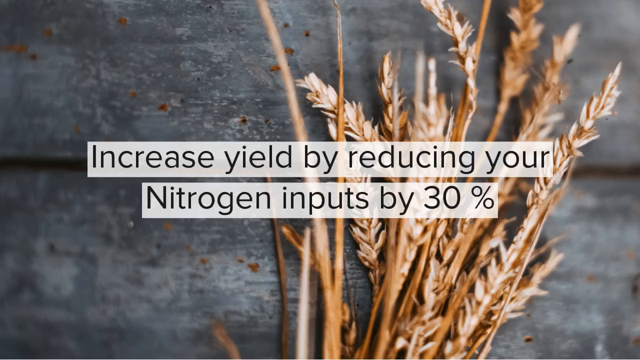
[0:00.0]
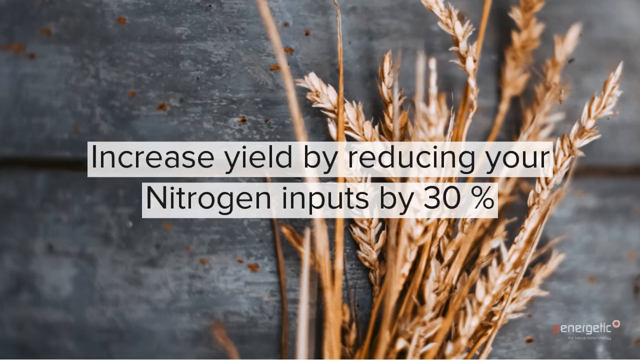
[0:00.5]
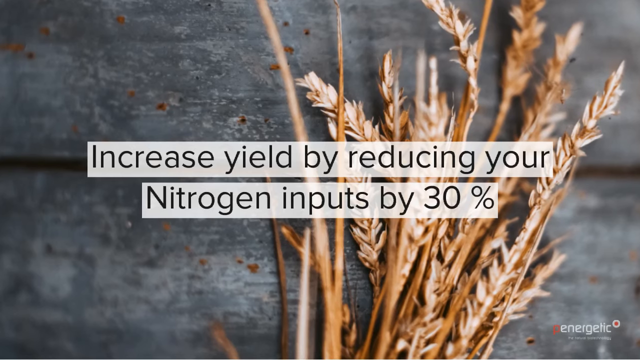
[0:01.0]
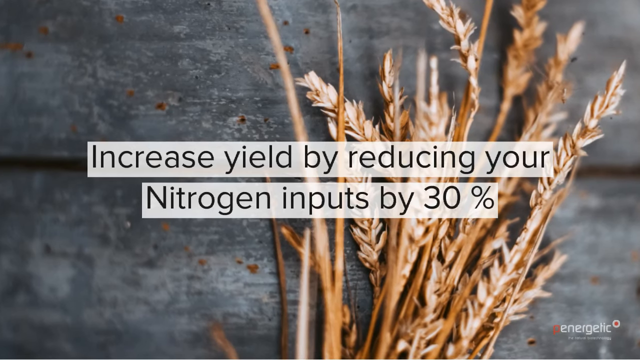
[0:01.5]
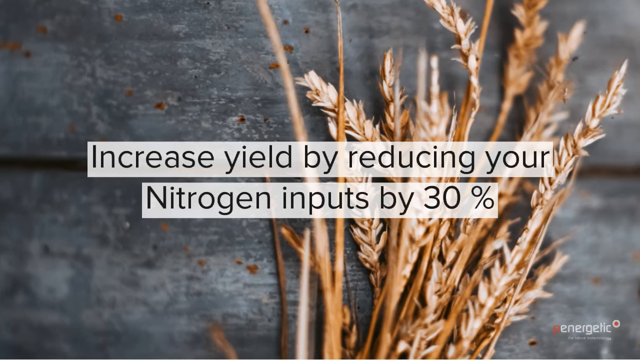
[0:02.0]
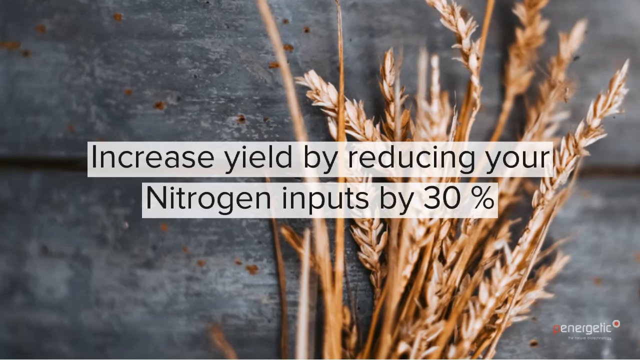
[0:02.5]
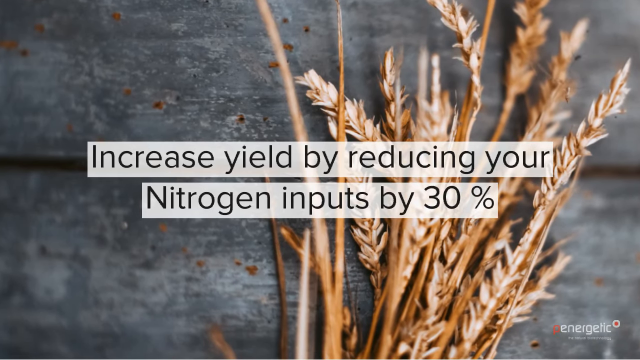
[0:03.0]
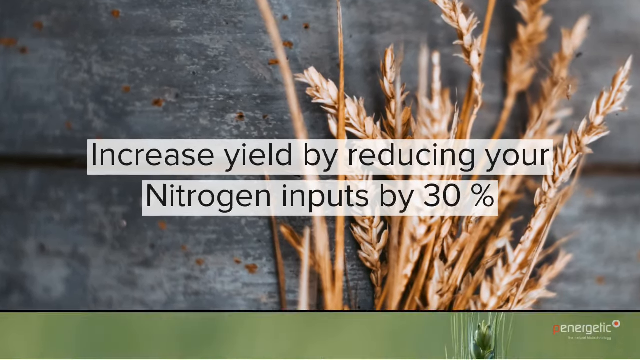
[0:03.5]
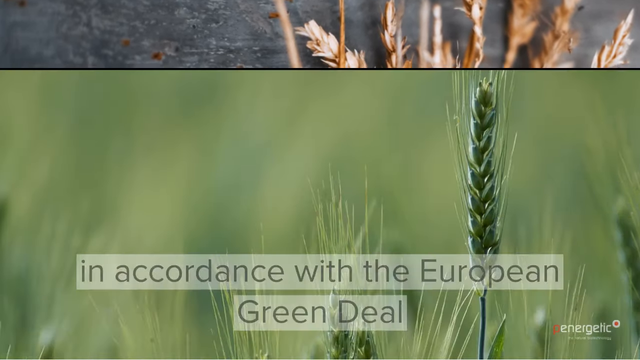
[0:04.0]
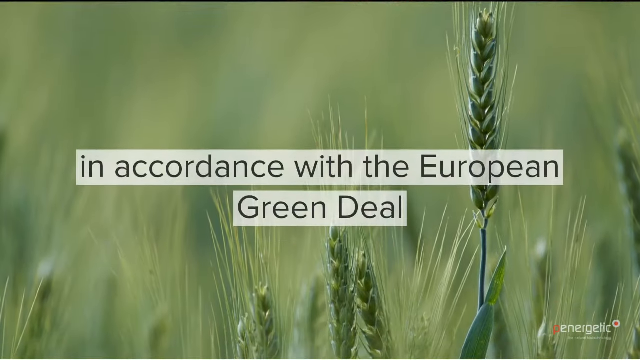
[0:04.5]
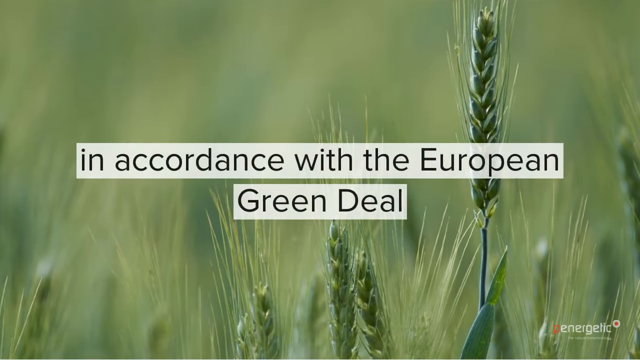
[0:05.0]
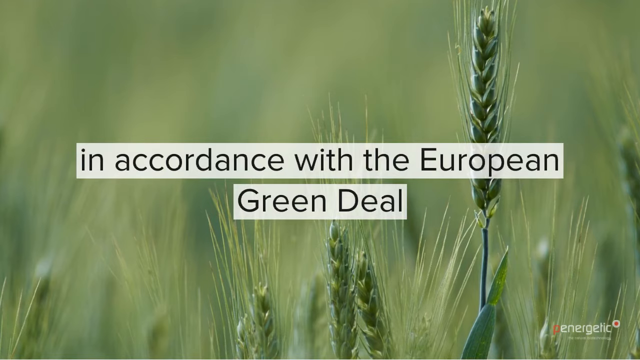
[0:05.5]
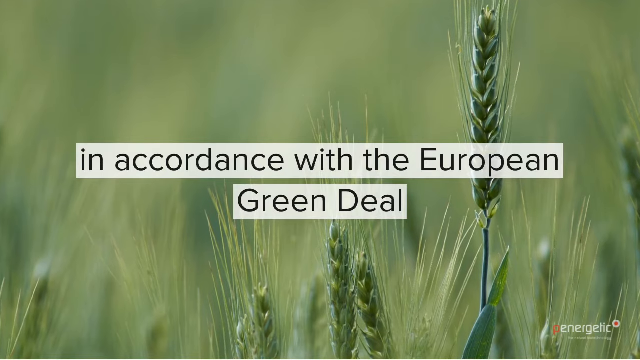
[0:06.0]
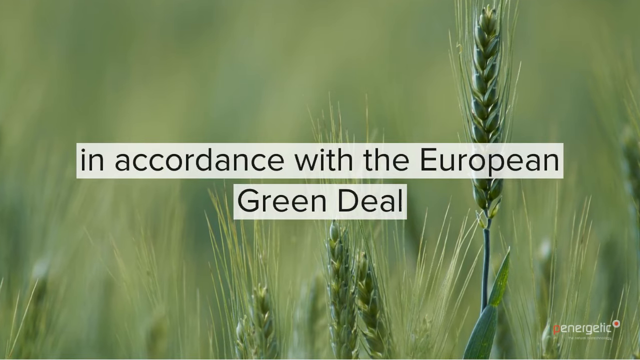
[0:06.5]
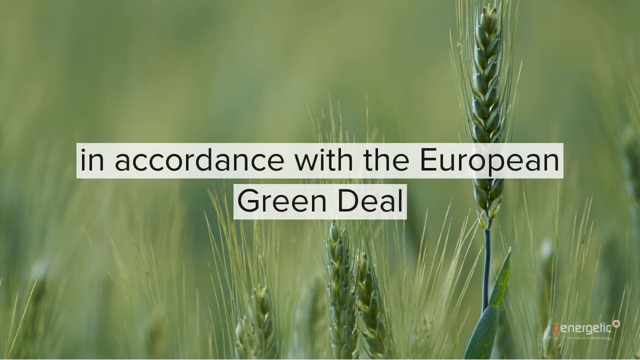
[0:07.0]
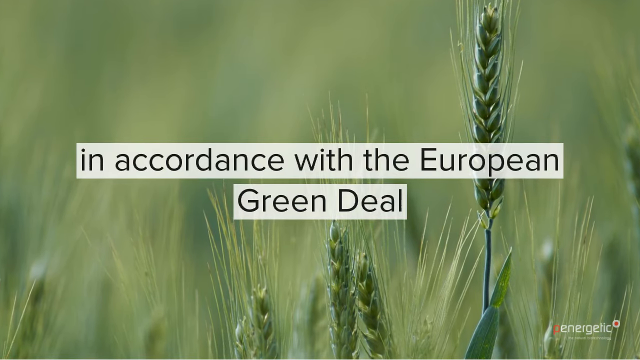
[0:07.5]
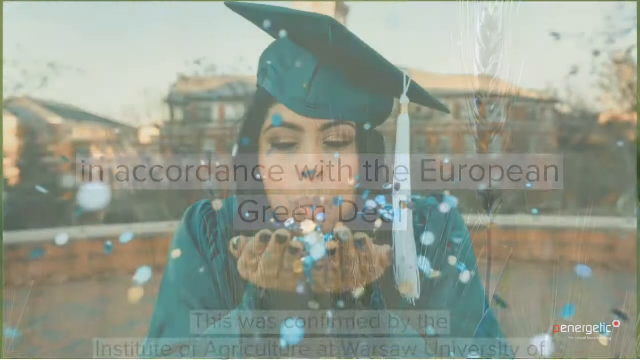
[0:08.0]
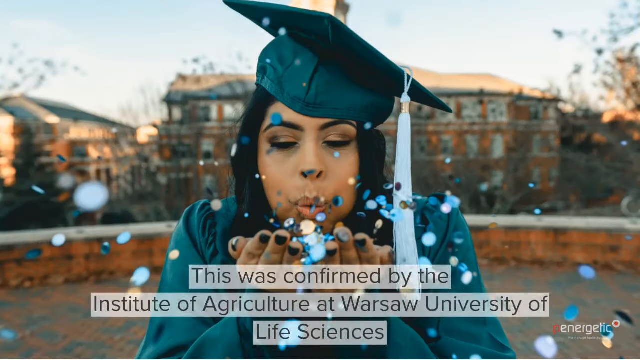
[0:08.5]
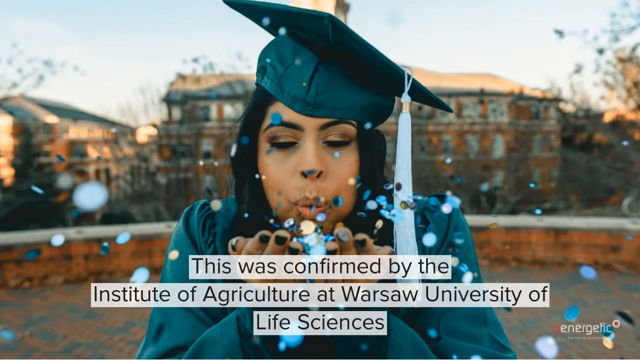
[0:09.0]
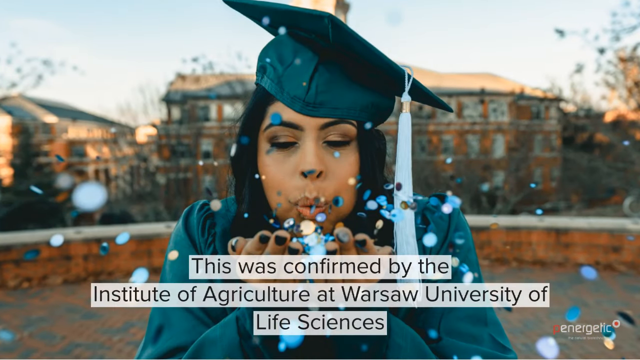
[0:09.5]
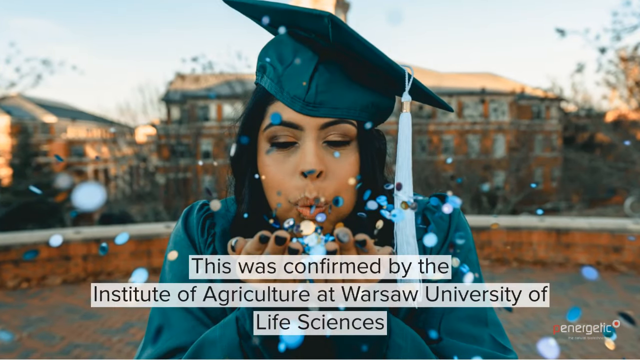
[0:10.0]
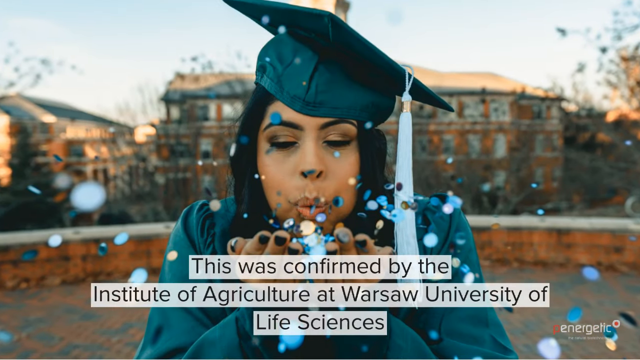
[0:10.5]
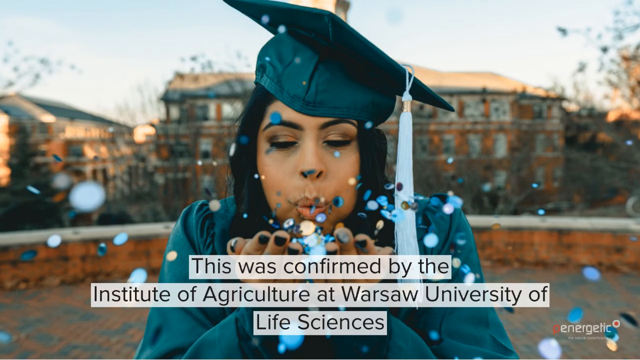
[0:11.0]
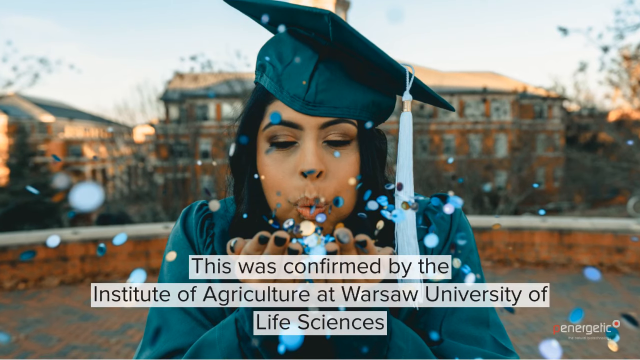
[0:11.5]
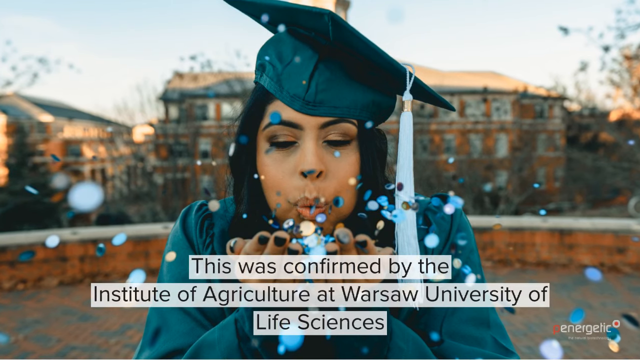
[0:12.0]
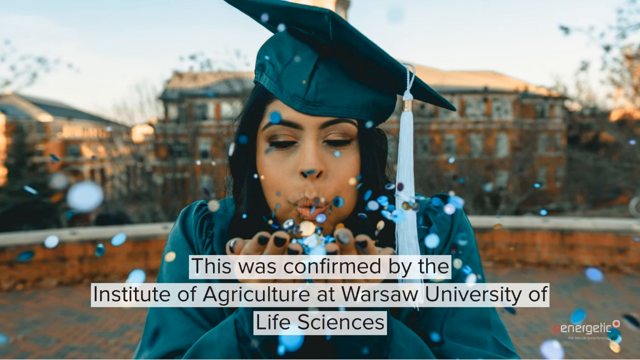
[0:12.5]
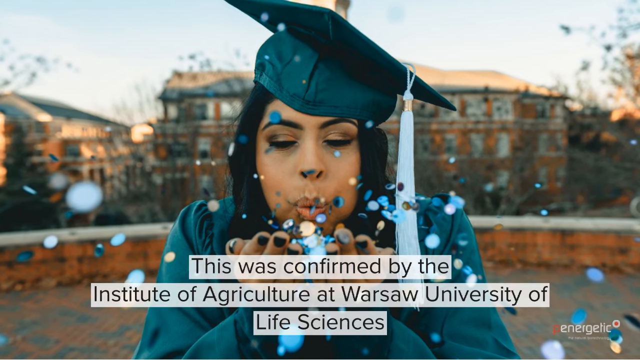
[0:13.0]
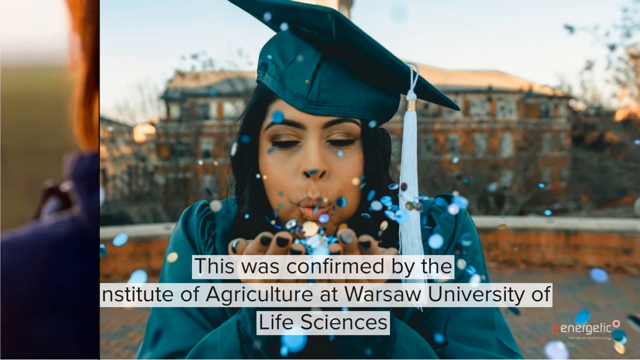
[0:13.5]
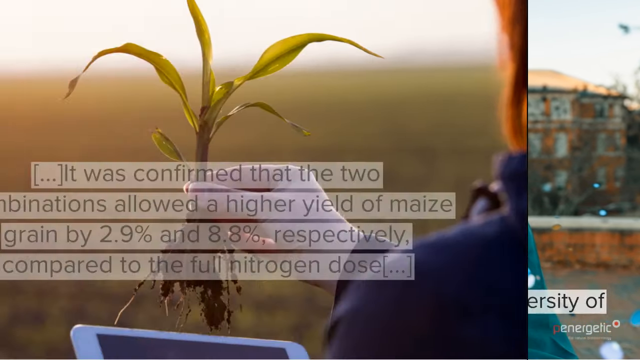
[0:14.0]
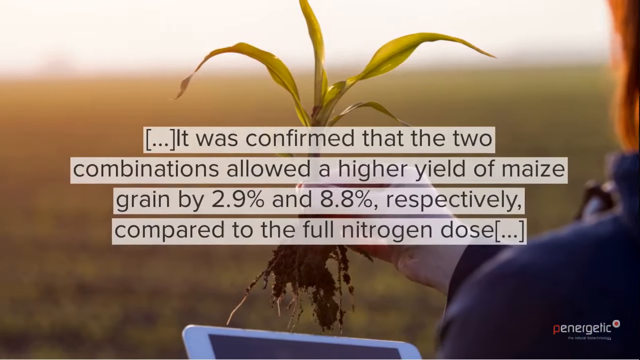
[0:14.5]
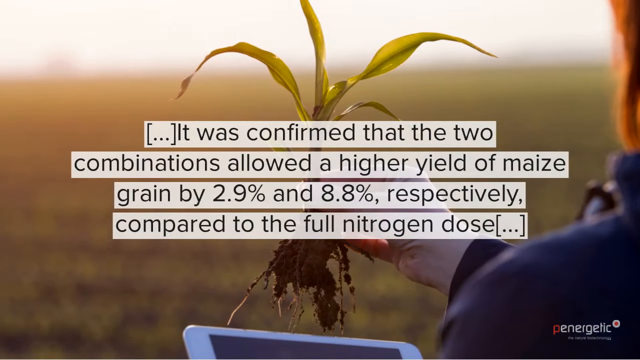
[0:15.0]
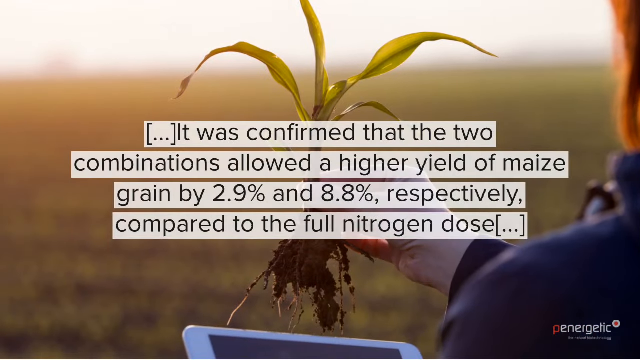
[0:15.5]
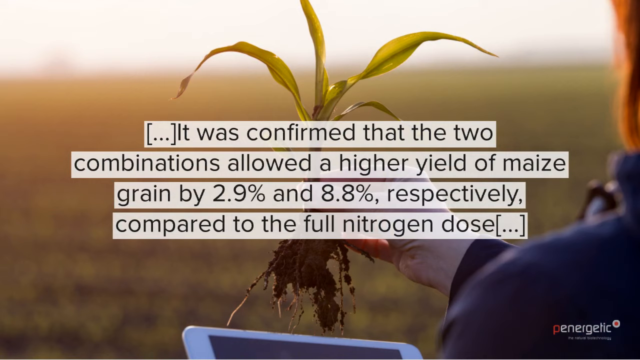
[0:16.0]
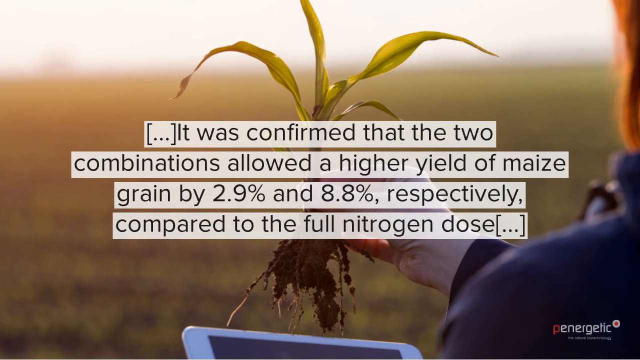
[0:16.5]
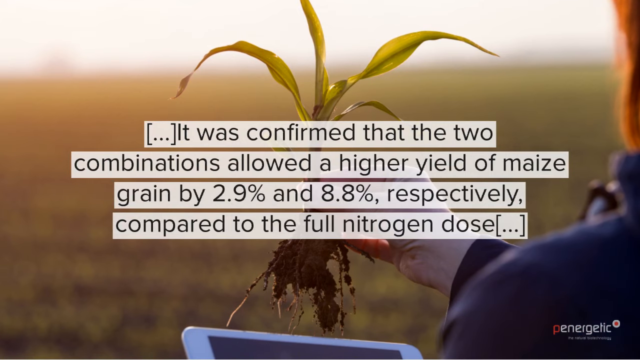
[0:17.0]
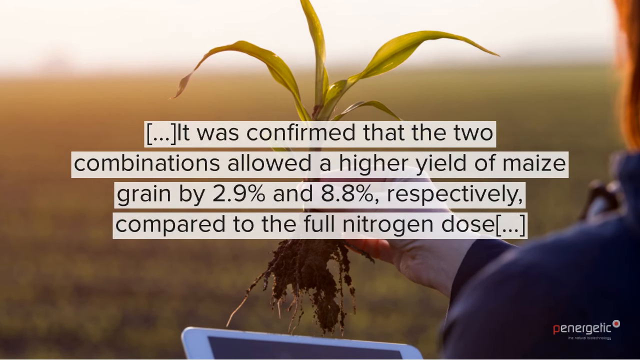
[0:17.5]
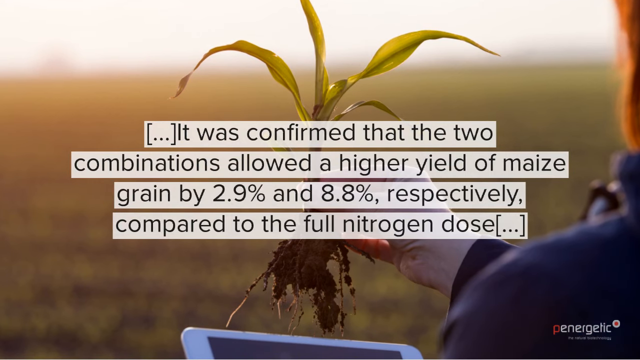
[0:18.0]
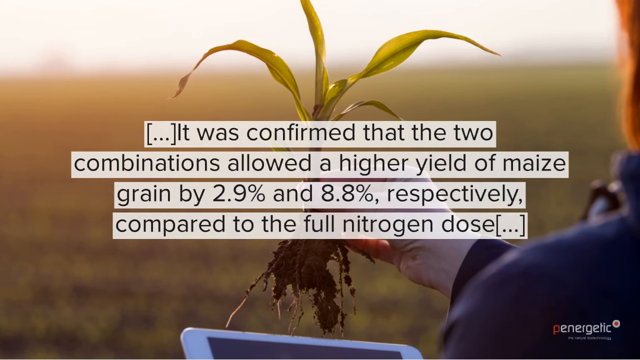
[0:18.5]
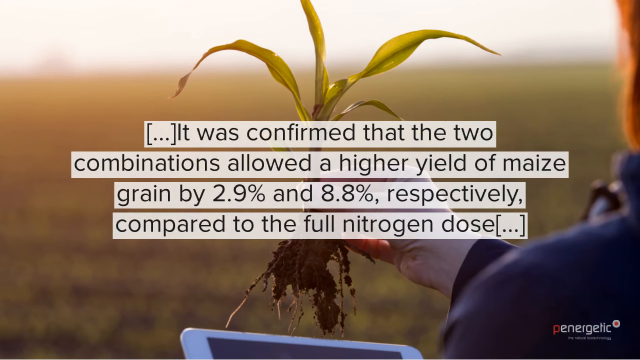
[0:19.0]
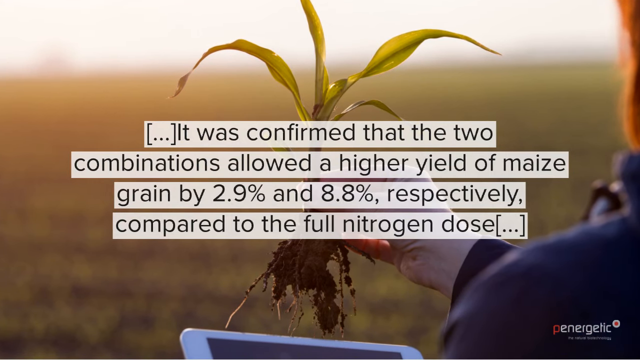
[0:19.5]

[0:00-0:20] A stock picture shows dried wheat on a dark wood table, with the text "increase yield by reducing your nitrogen inputs by 30%." The wheat is golden, and text mentions "in accordance with the European Green Deal." The video is made by Energetic, or Pea Energetic, whose logo has an orange pea. Another picture shows wheat in the fields, and this wheat is green. Text reads "This was confirmed by the Institute of Agriculture at Warsaw University of Life Sciences." Another stock picture shows a Hispanic woman blowing sparkles into the air, wearing a graduation gown and cap. Text reads "It was confirmed that the two combinations allowed a higher yield of maize grain by 2.9% and 8.8%, respectively, compared to the full nitrogen dose."